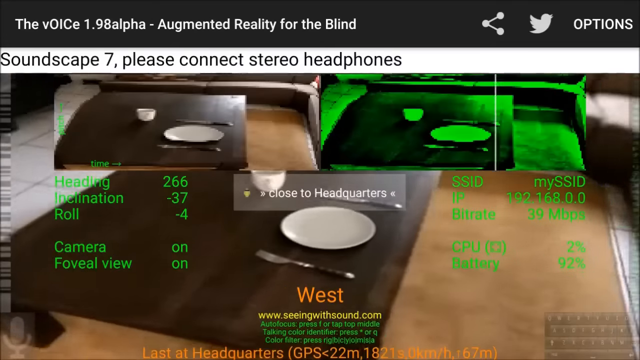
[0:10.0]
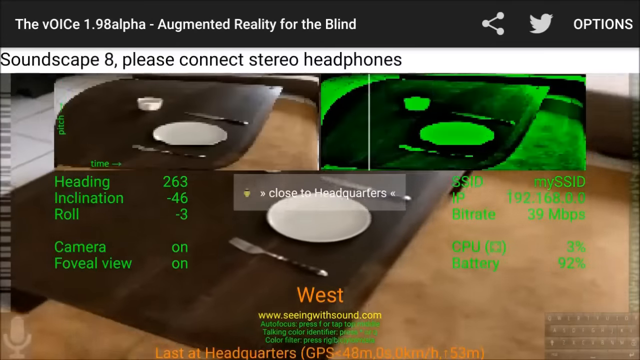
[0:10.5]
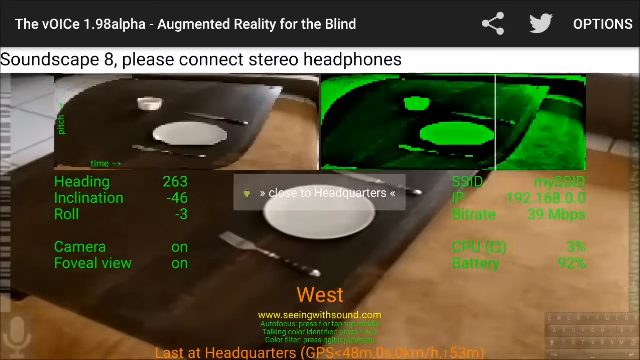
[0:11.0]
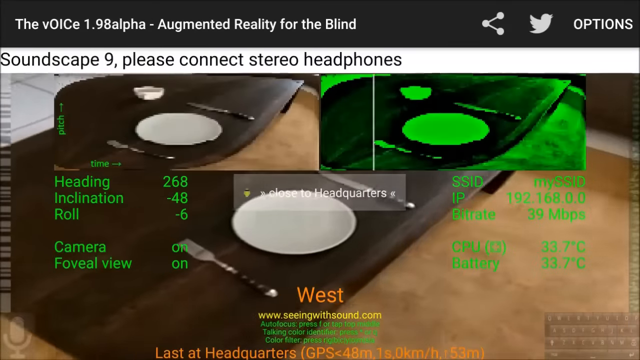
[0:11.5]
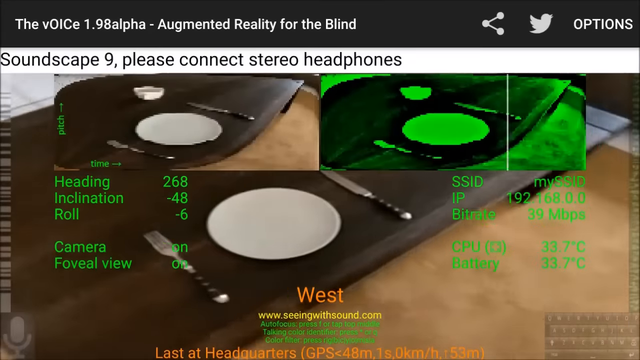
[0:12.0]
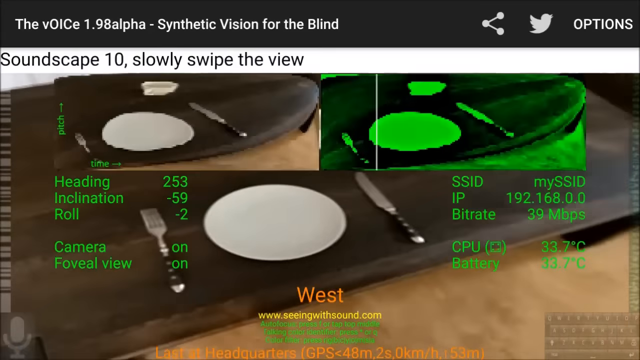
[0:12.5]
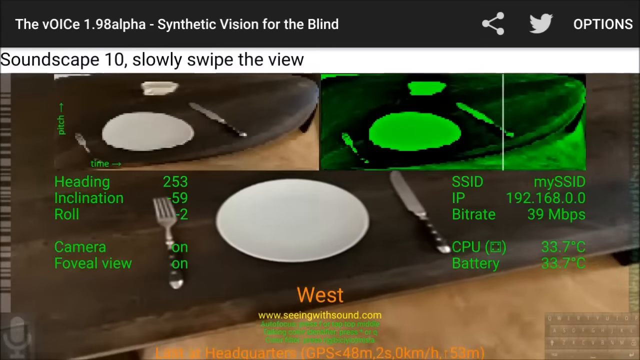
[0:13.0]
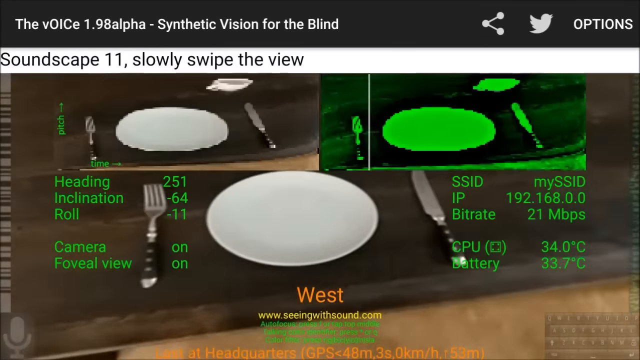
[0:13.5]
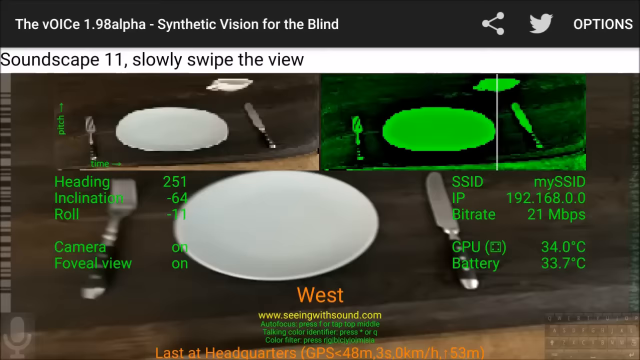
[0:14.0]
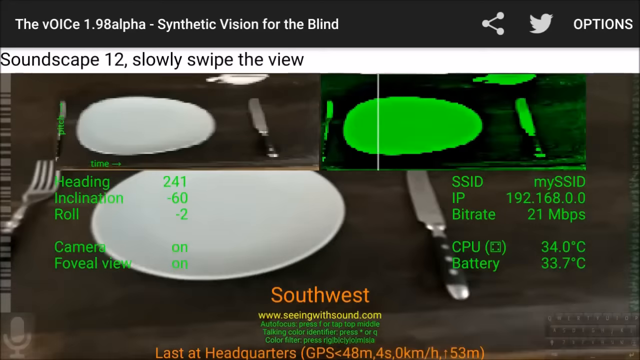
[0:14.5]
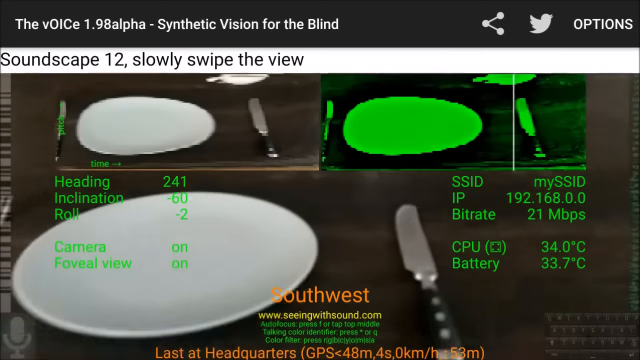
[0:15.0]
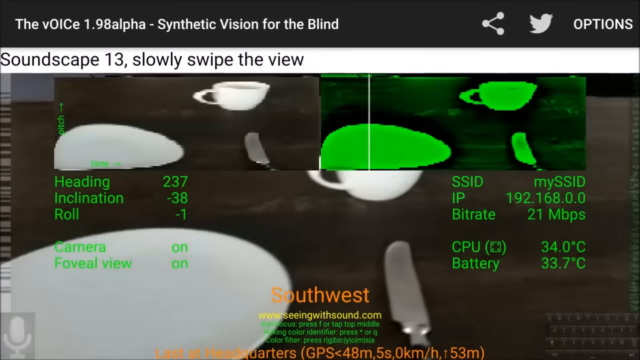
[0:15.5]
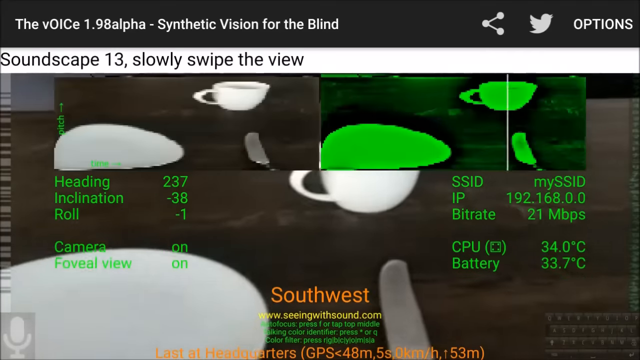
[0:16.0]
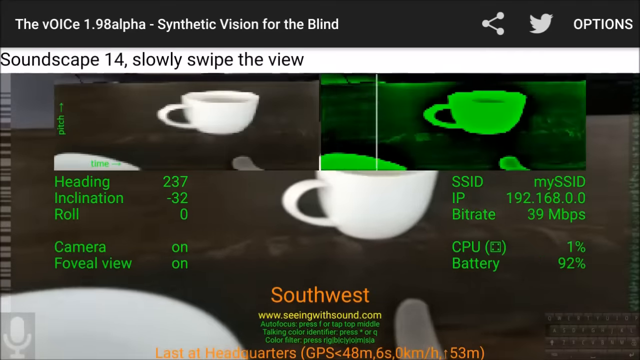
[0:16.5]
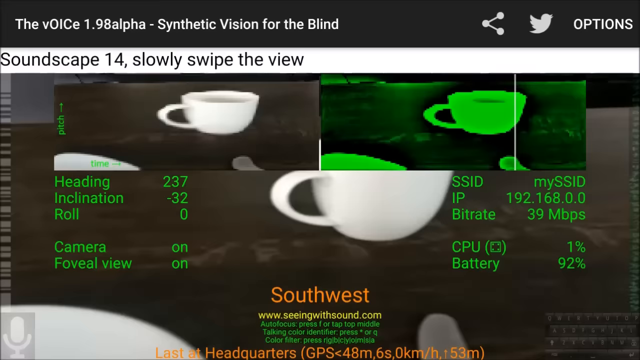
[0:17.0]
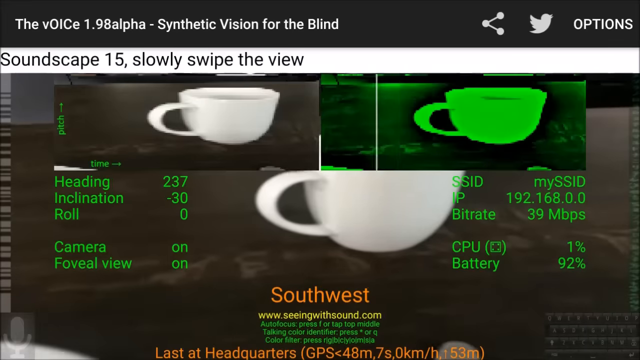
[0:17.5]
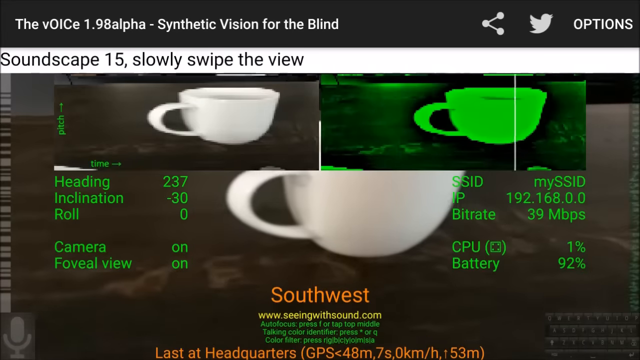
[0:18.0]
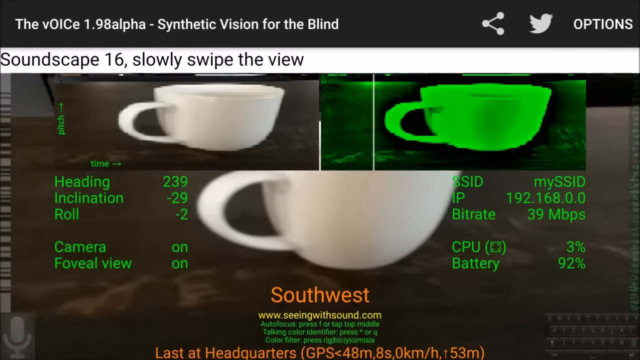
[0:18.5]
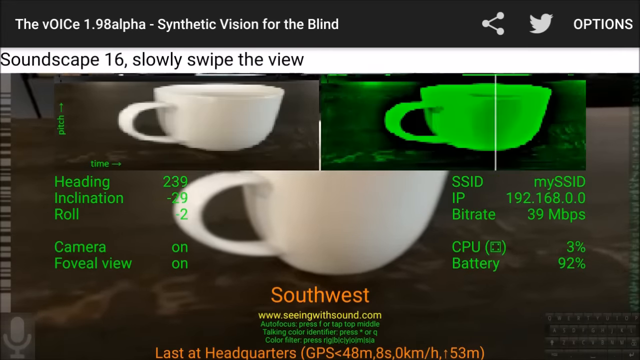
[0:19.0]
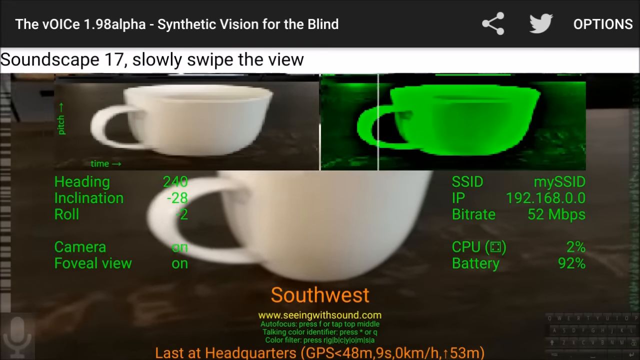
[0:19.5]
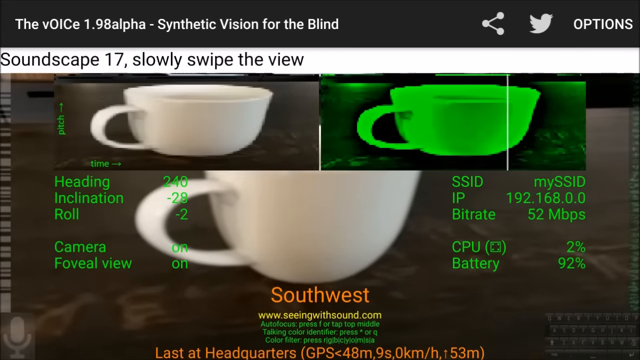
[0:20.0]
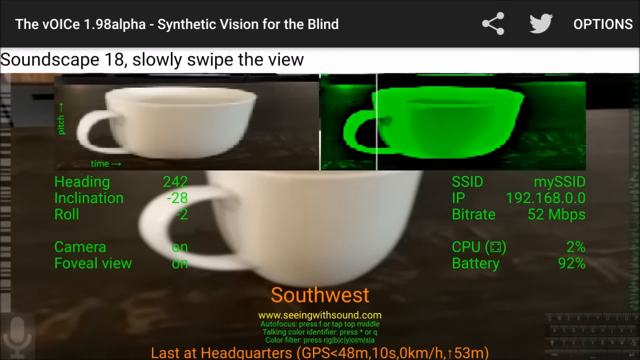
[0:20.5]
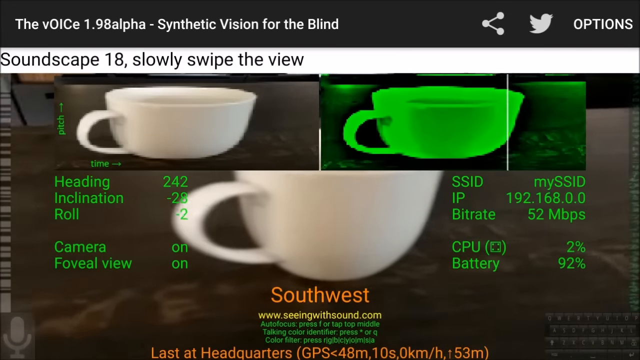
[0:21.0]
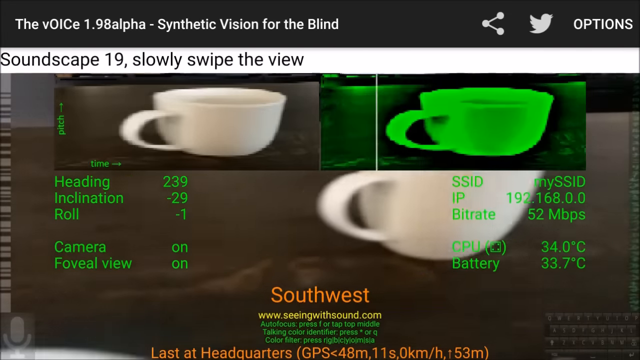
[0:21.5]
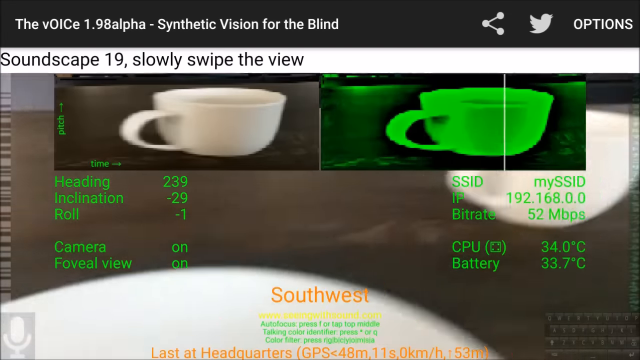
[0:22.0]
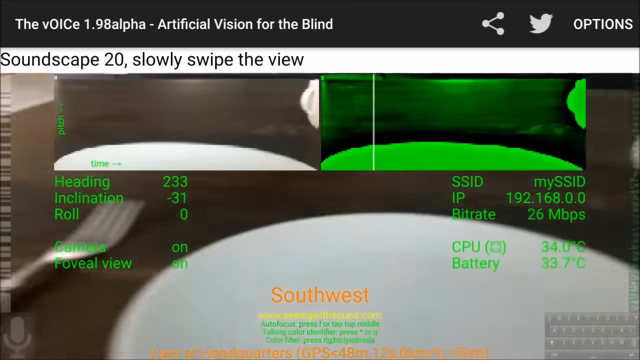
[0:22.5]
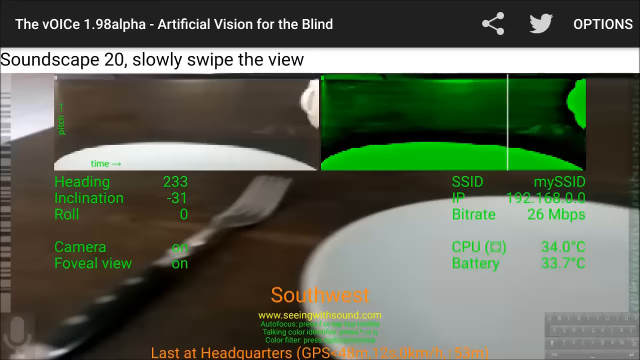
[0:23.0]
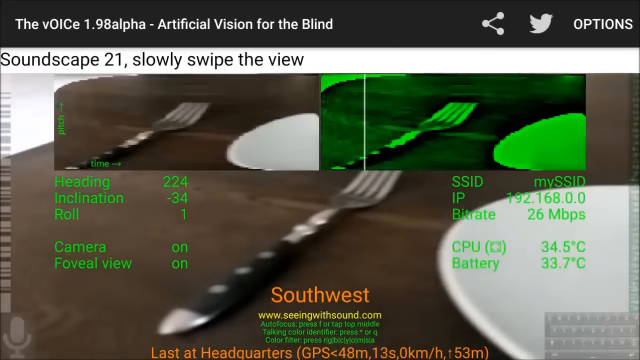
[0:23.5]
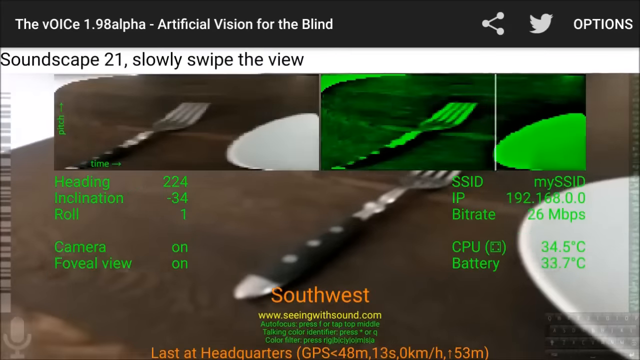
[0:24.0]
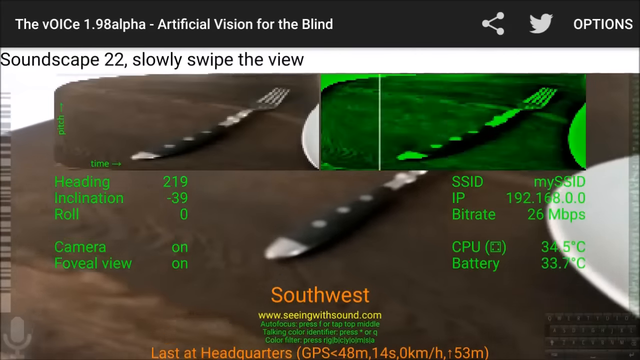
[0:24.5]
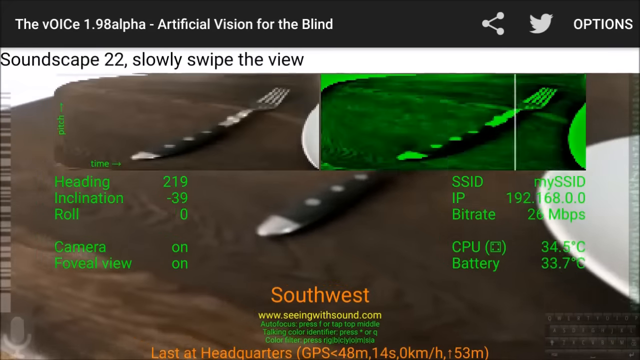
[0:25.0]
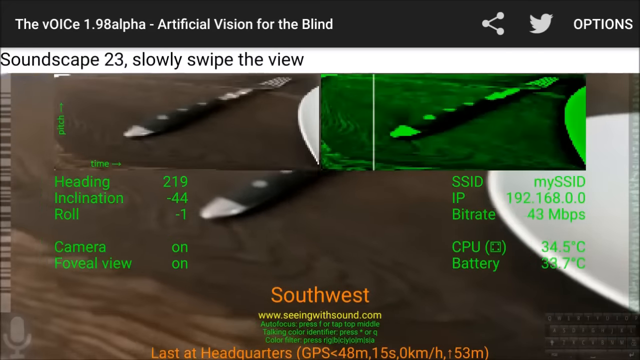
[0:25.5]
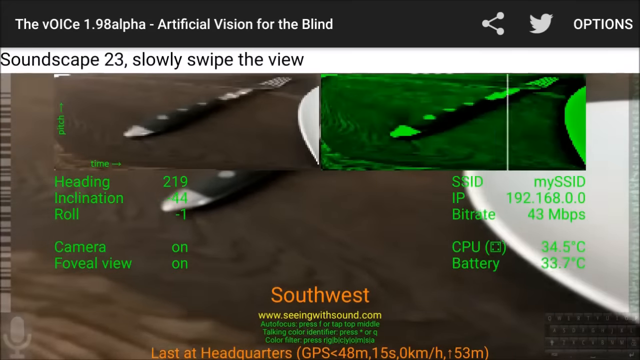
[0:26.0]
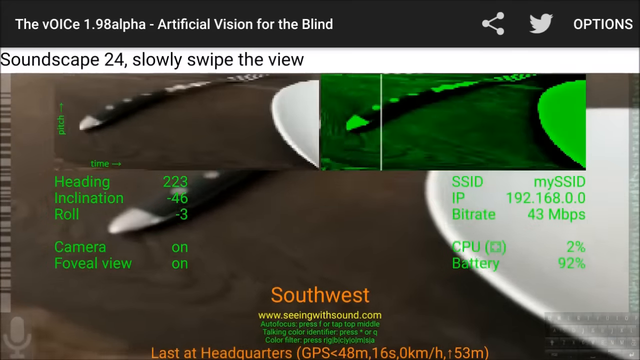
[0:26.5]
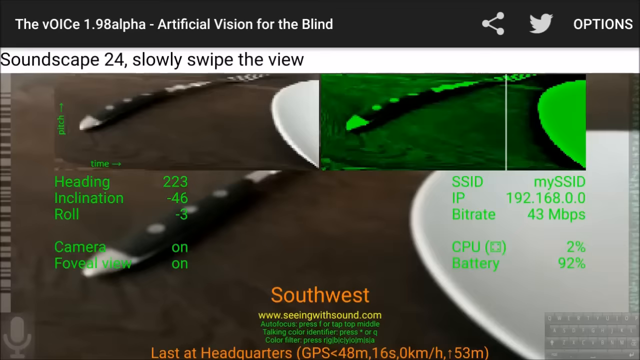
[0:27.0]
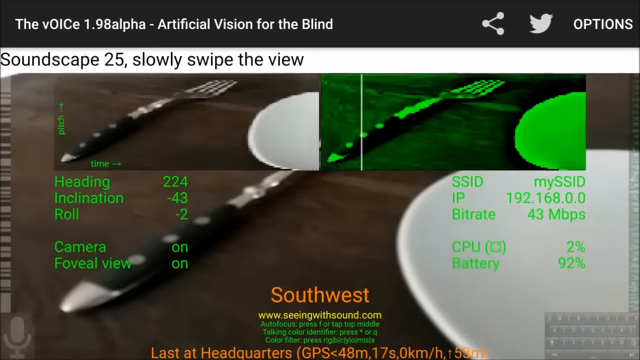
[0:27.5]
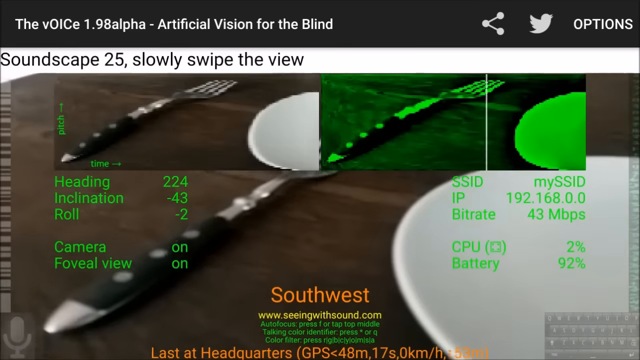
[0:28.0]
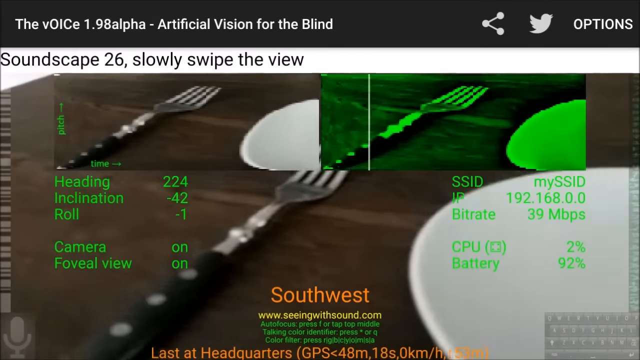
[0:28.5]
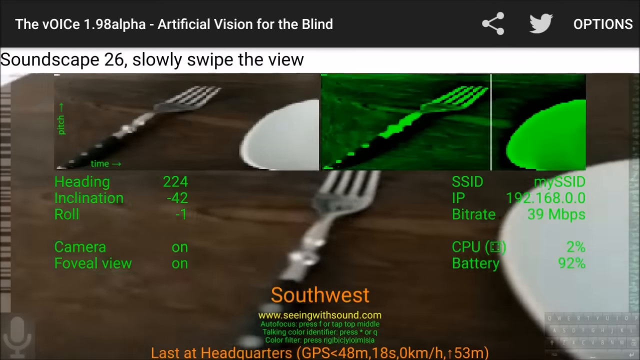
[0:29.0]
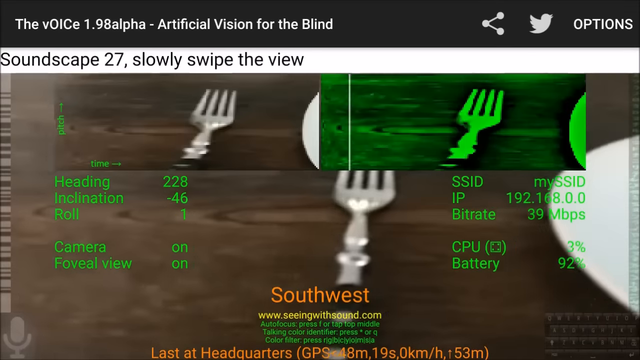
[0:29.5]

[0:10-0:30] The camera moves closer to the table in the living room, where there is cutlery and a plate: a fork and a knife. The person looks at them as they are scanned with the camera. At the bottom of the screen is directional information reading "west" and "southwest," apparently showing which direction the camera is facing. Next to the plate is a white mug, which is also scanned. The images at the top show the same thing as the video, as renders, and the scanning is very slow, possibly because it happens in real time. The app appears to be intended to act as vision for the blind.